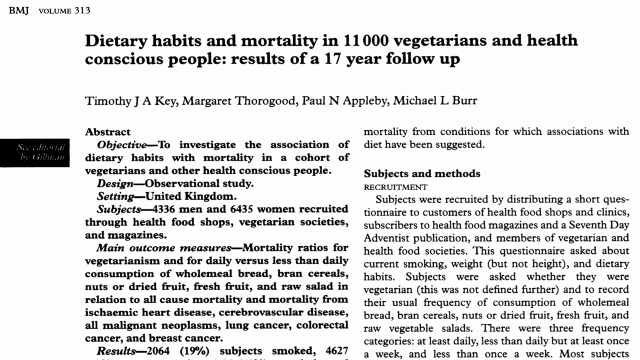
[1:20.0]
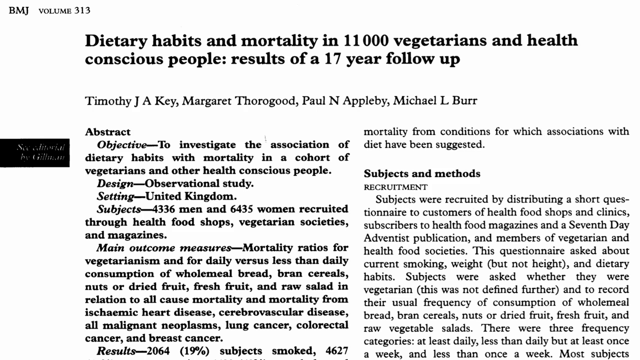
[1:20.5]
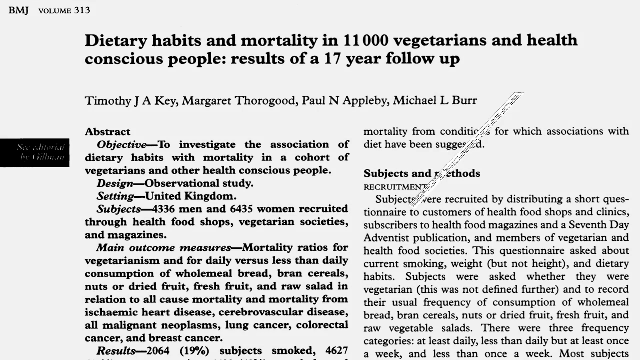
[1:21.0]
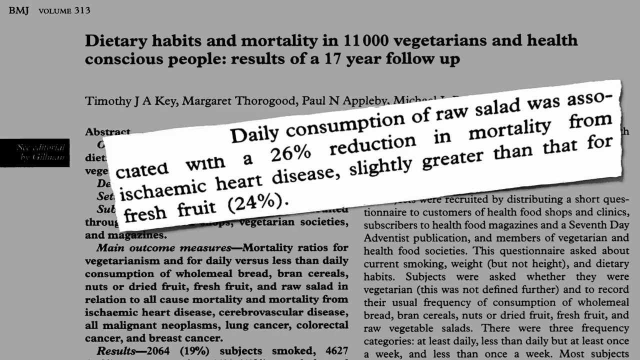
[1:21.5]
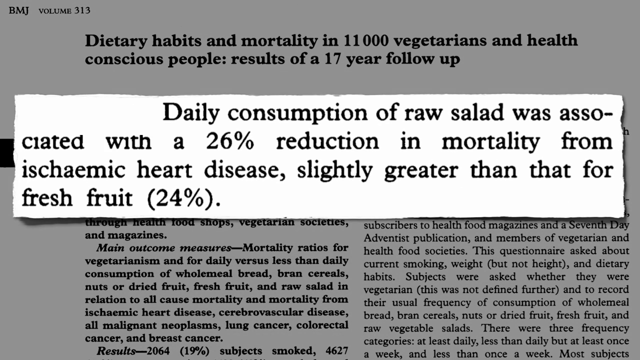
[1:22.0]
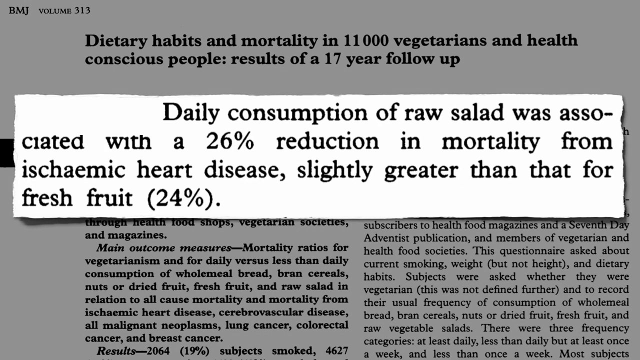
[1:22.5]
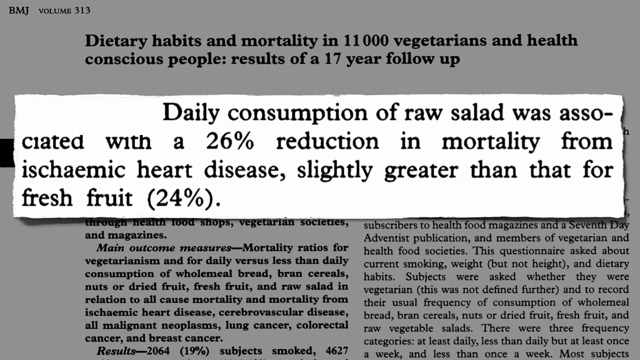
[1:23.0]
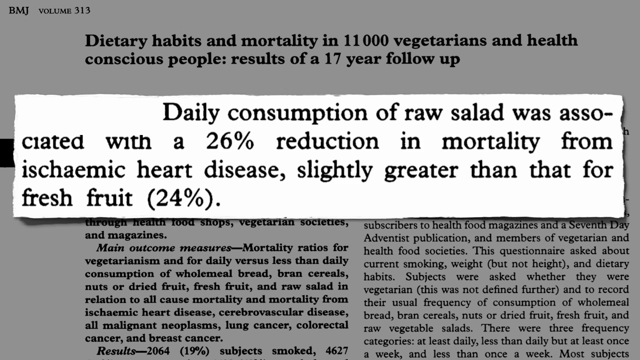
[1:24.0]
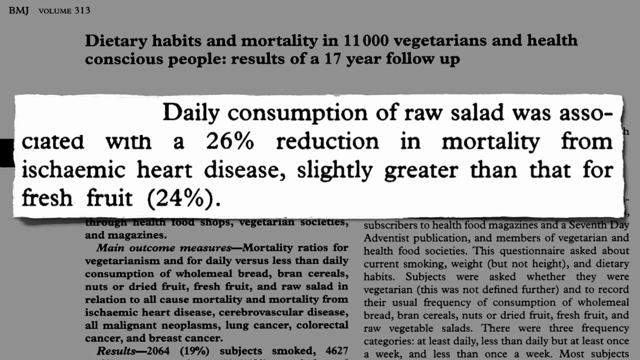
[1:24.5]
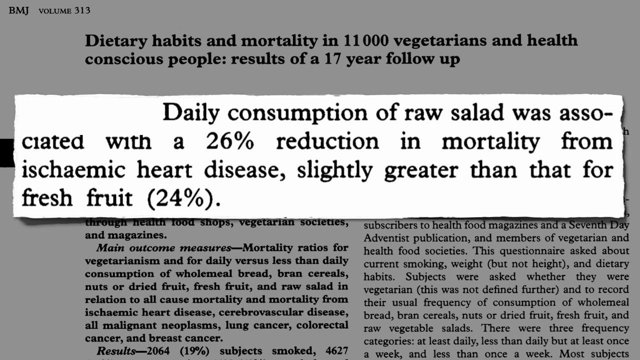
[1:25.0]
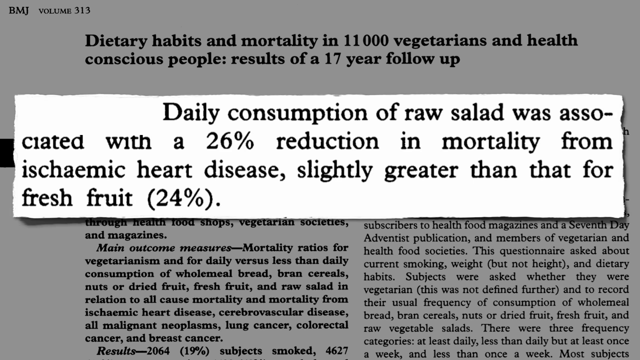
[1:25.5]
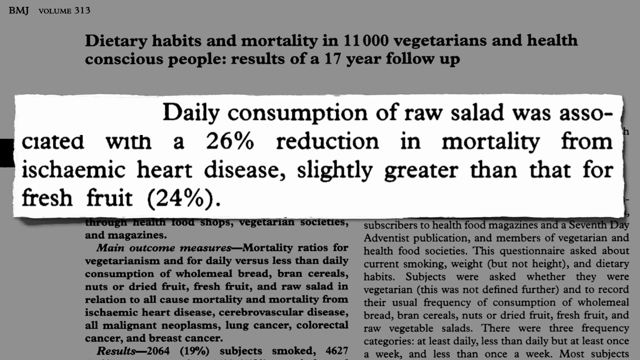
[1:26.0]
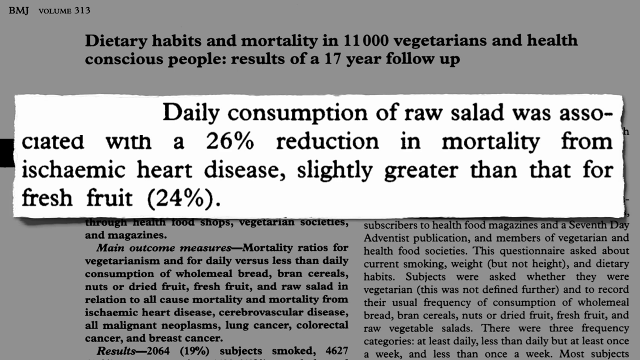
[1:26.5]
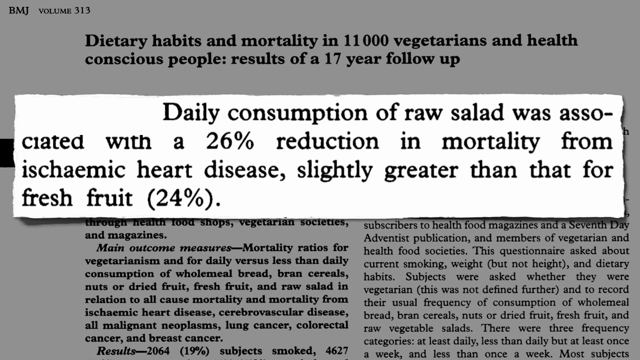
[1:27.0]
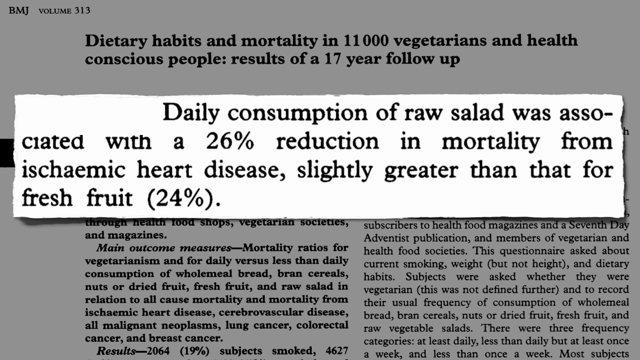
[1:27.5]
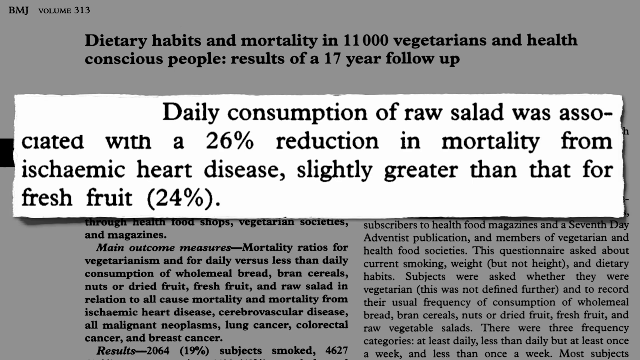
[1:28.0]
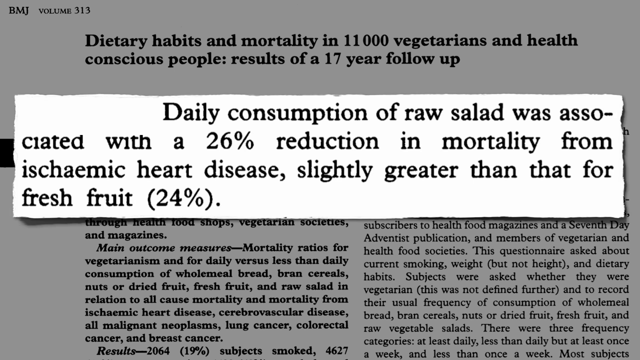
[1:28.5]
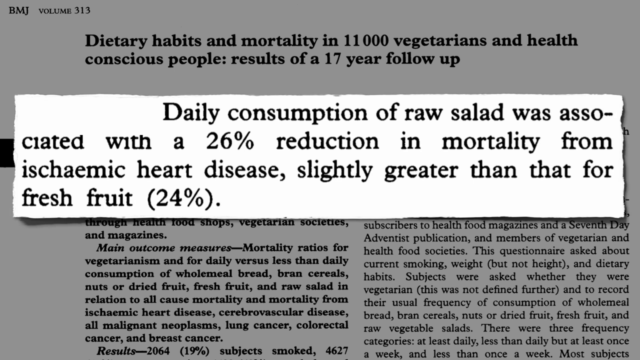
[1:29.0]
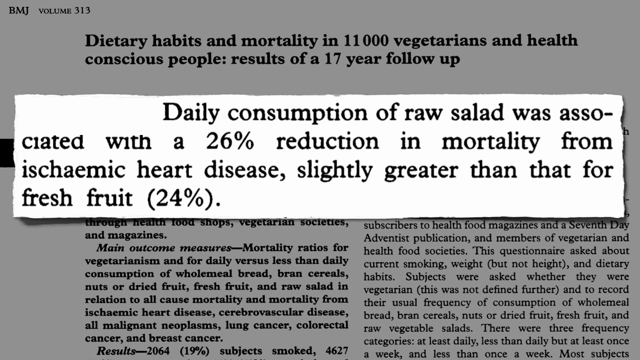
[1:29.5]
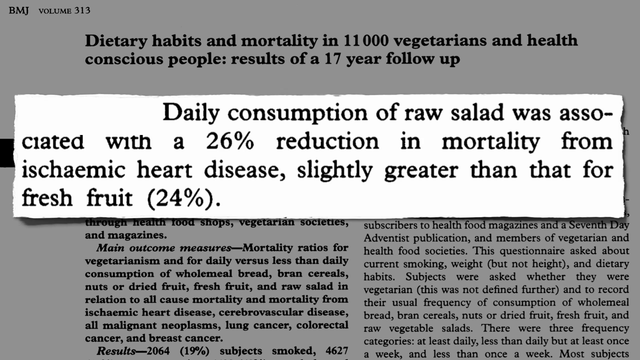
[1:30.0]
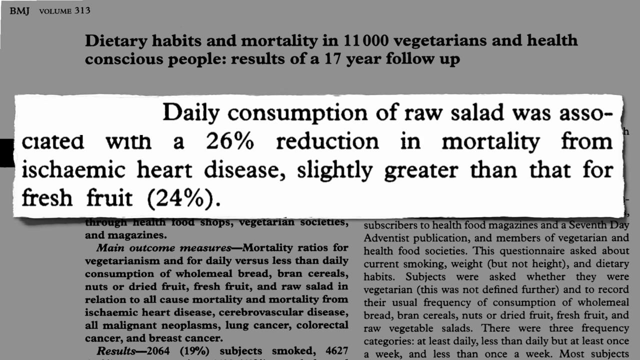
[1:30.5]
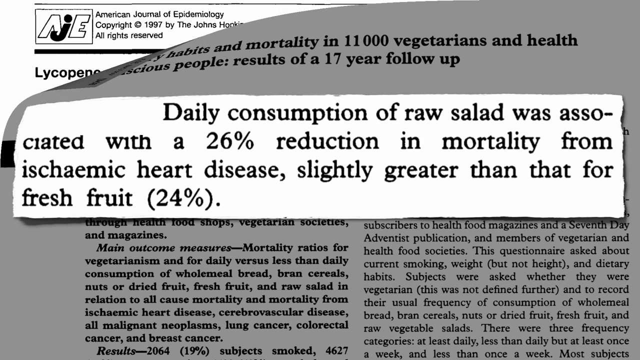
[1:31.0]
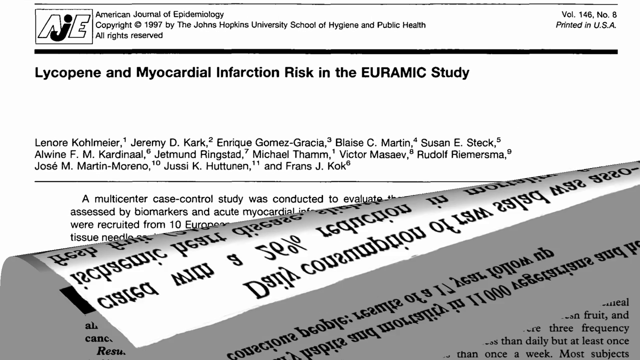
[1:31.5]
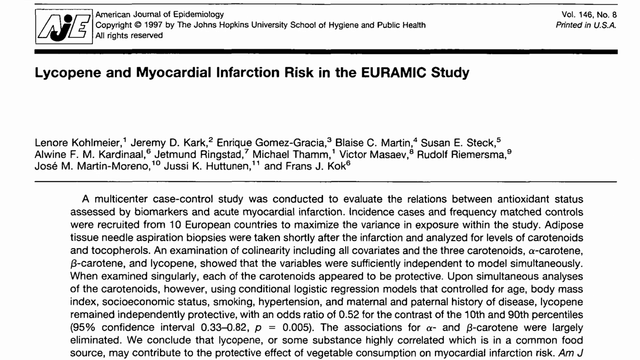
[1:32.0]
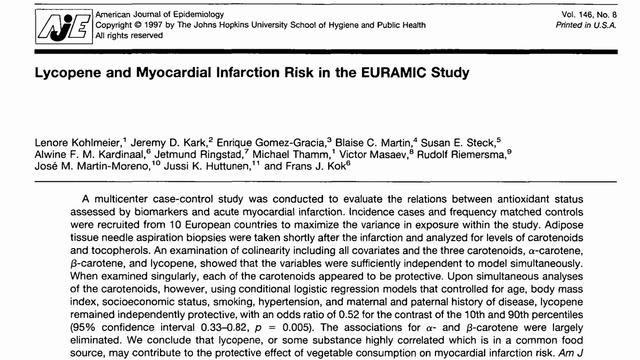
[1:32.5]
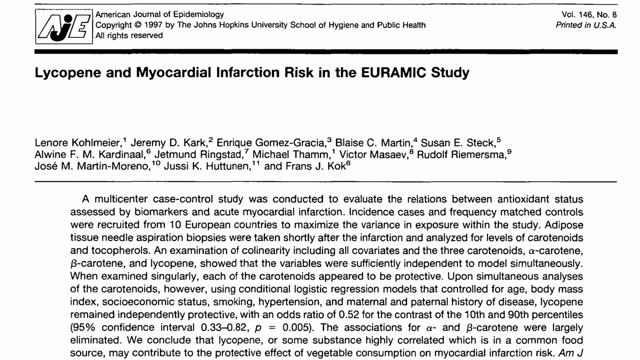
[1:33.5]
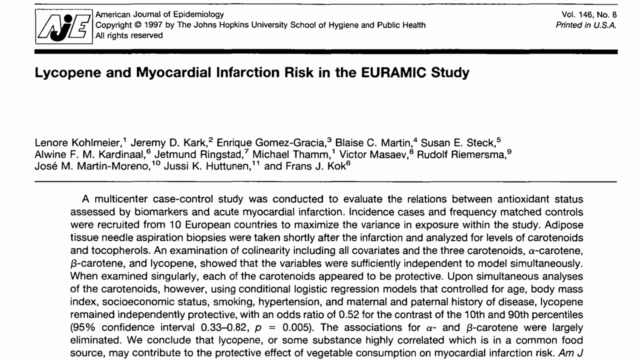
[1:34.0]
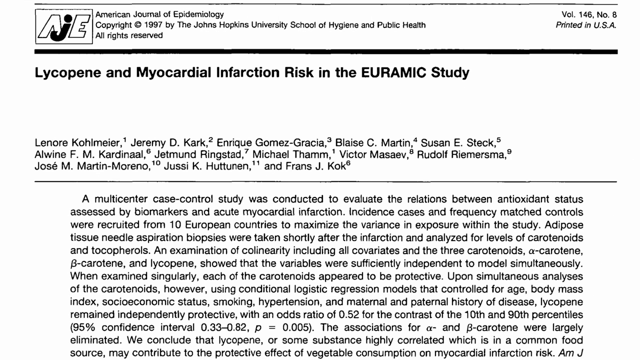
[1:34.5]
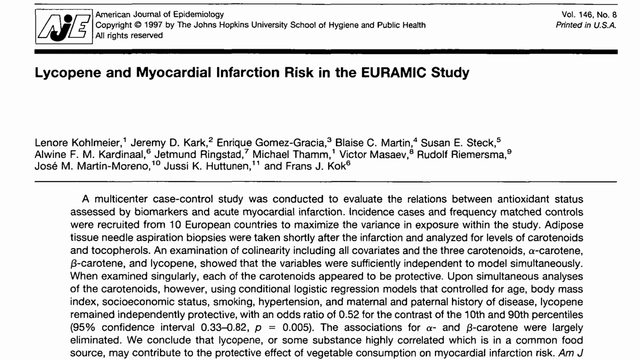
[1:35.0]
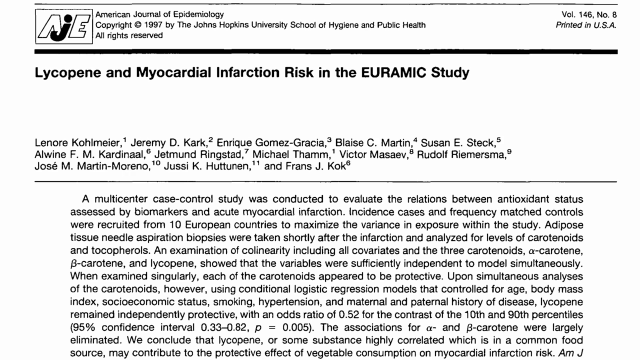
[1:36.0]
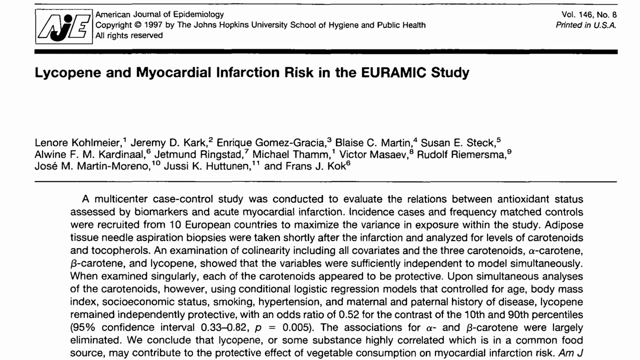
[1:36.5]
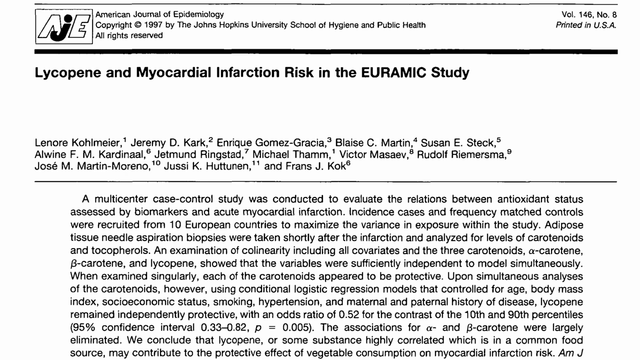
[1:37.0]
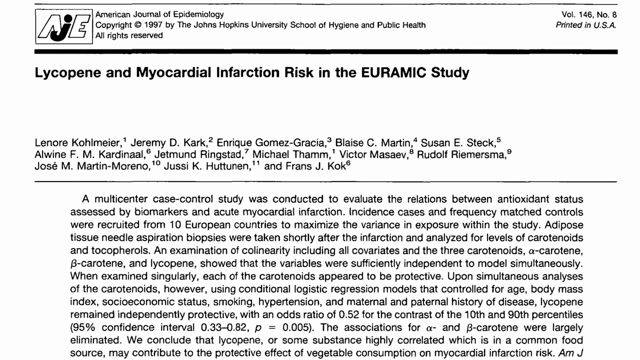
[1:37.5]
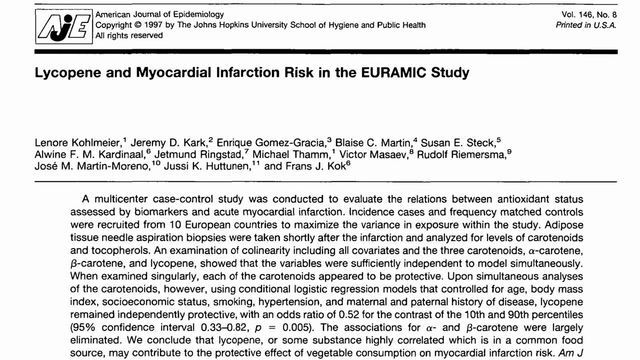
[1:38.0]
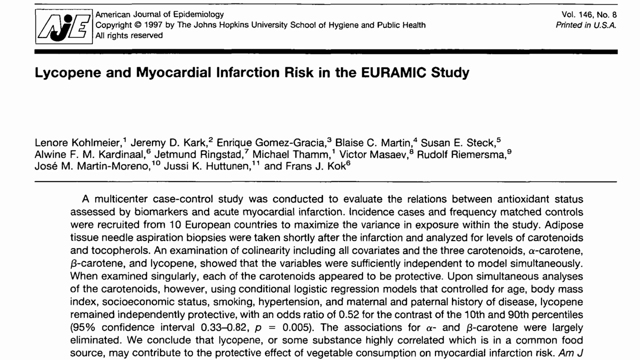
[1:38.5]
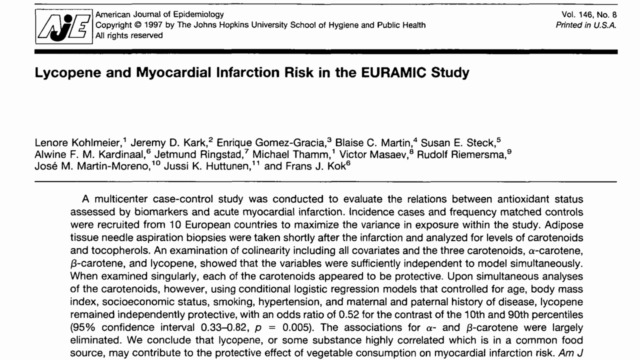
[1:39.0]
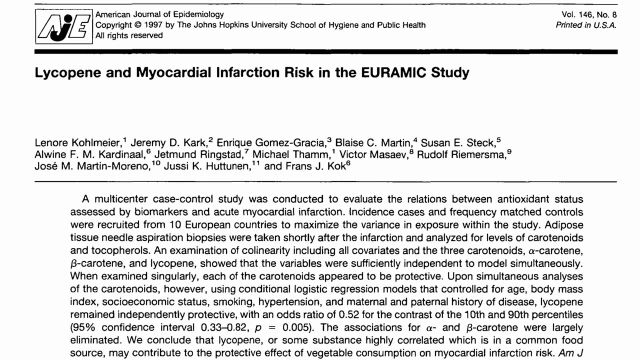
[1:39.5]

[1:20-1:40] On screen is the study "dietary habits and mortality in 11,000 vegetarians and health-conscious people, results of a 17-year follow-up," with an abstract describing who was studied: vegetarians found through different groups online or at health food shops. It reads "main outcome measures mortality ratios for vegetarianism and for daily versus less than daily consumption of wholemeal bread, bran cereals, nuts, or dried fruit, fresh fruit, and raw salad in relation to all-cause mortality and mortality from ischemic heart disease, cerebrovascular disease, all malignant neoplasms, lung cancer, colorectal..." A rectangle then appears on the screen highlighting the words "daily consumption of raw salad was associated with a 26% reduction in mortality from ischemic heart disease, slightly greater than that for fresh fruit, 24%."